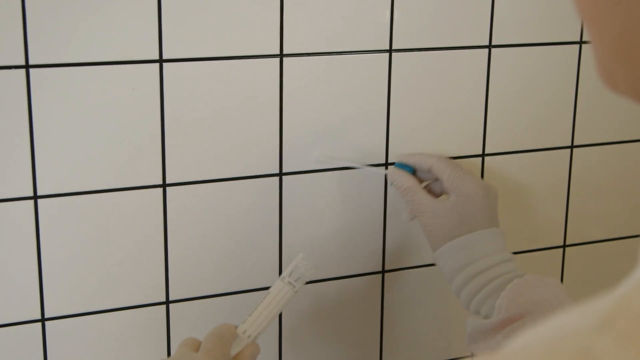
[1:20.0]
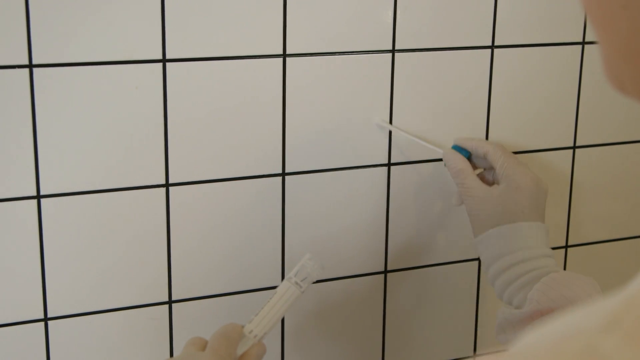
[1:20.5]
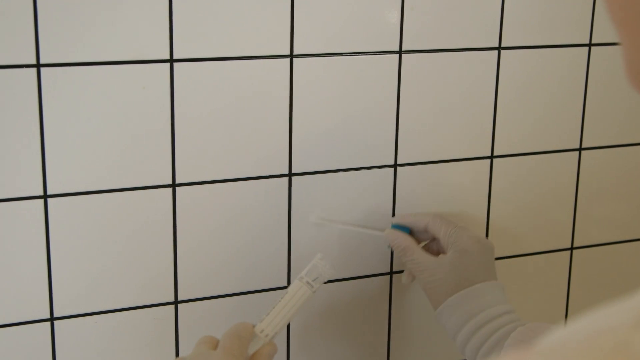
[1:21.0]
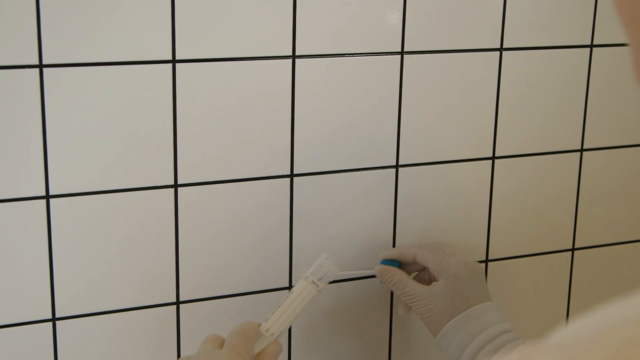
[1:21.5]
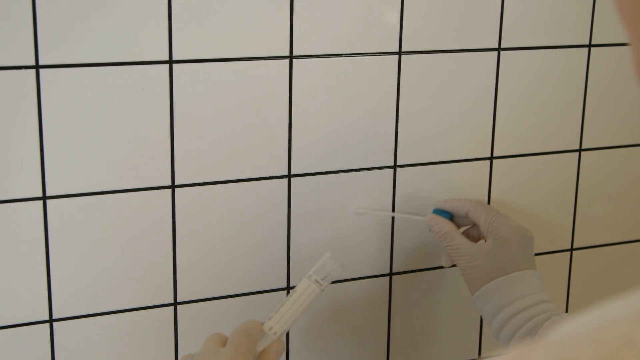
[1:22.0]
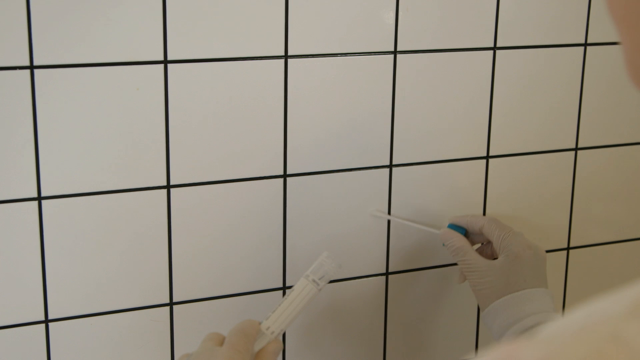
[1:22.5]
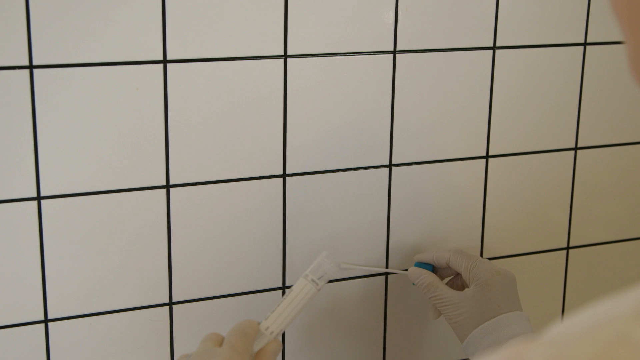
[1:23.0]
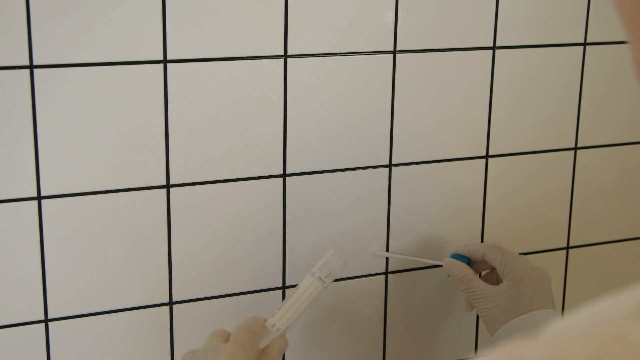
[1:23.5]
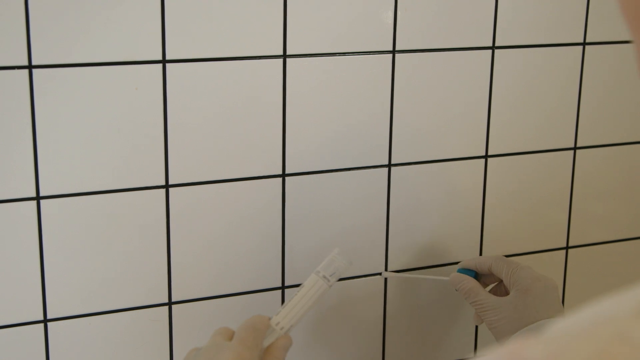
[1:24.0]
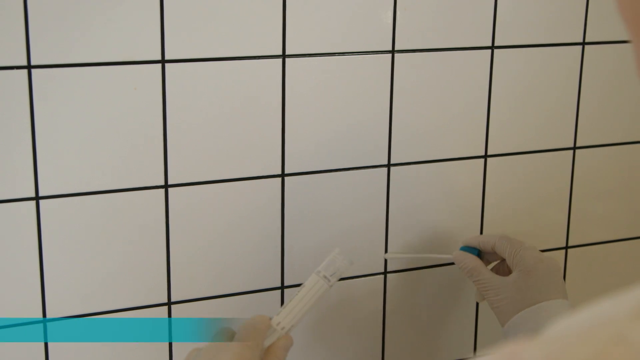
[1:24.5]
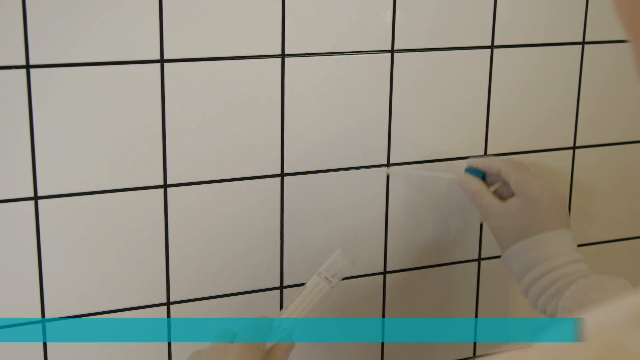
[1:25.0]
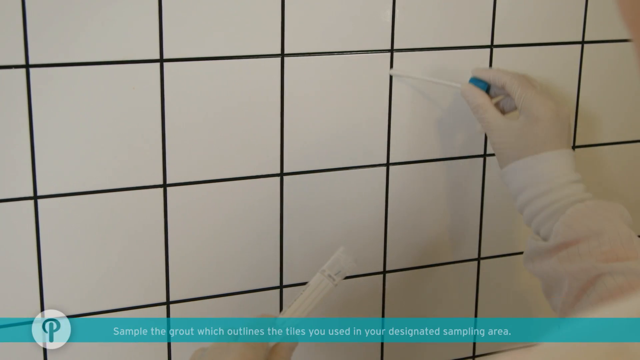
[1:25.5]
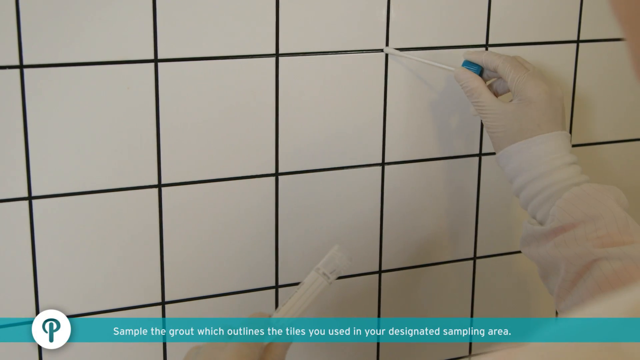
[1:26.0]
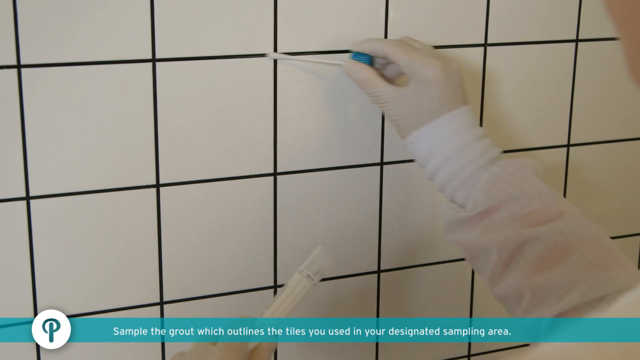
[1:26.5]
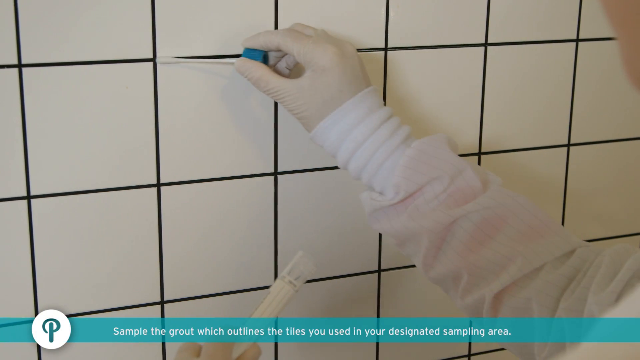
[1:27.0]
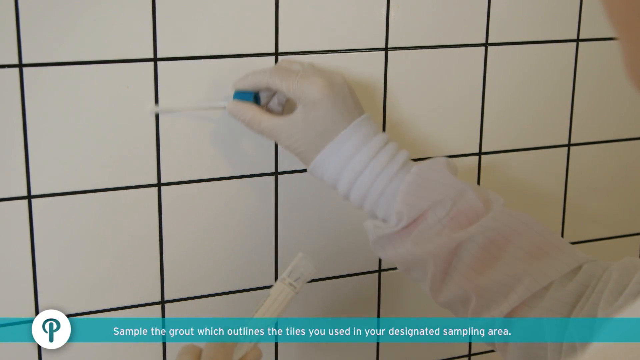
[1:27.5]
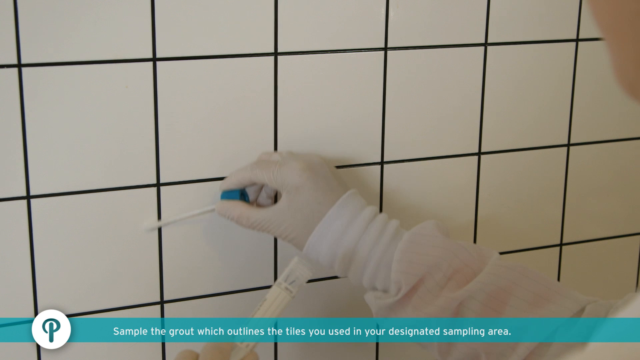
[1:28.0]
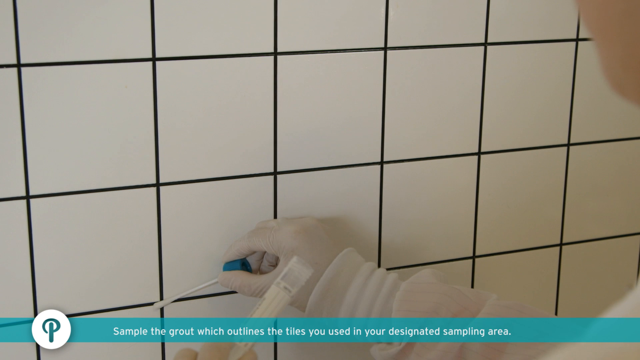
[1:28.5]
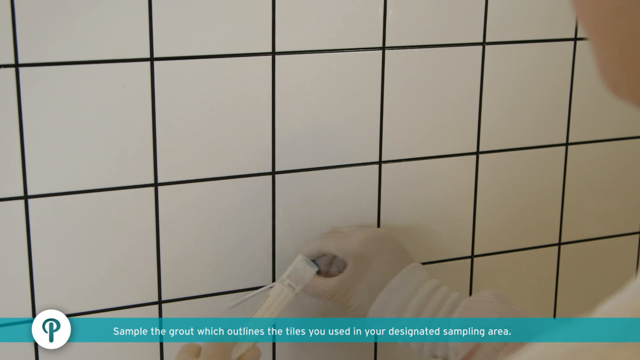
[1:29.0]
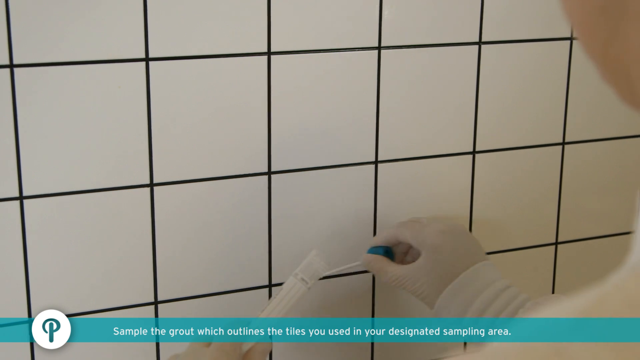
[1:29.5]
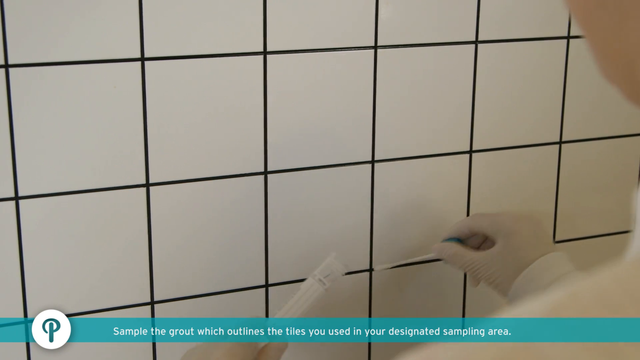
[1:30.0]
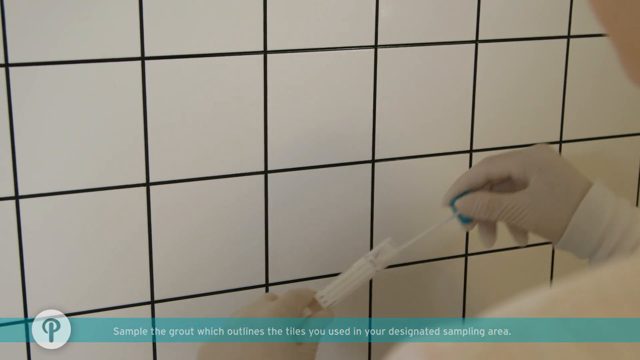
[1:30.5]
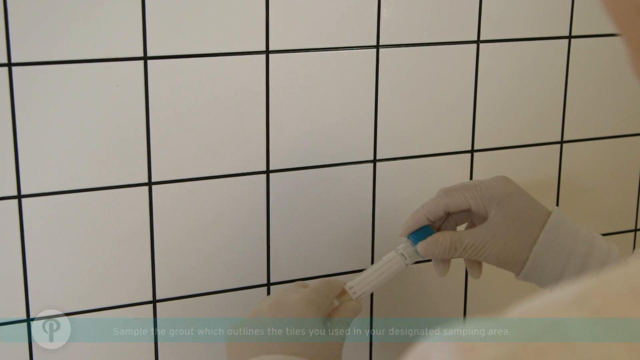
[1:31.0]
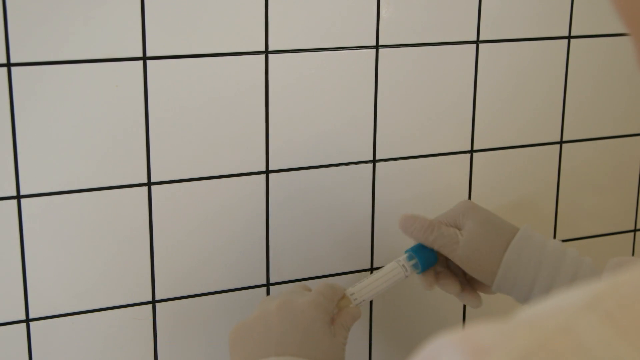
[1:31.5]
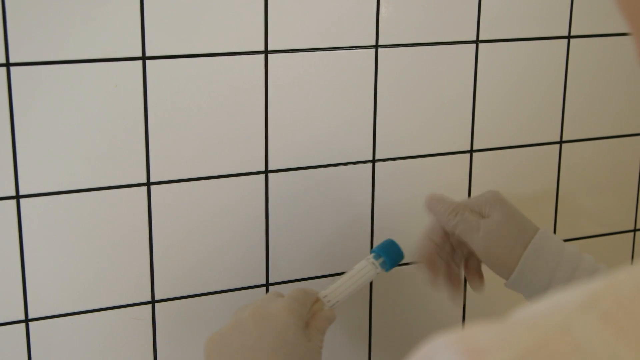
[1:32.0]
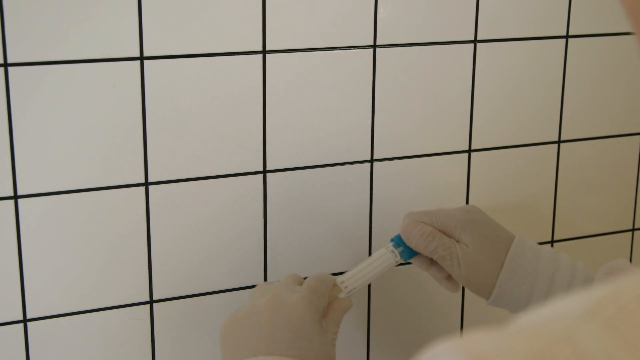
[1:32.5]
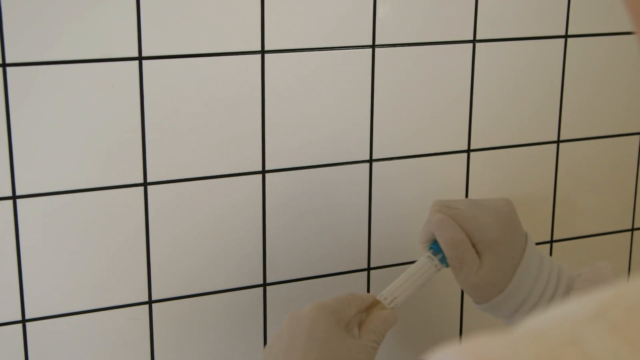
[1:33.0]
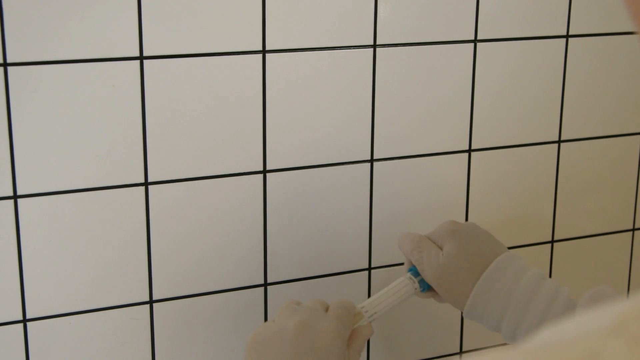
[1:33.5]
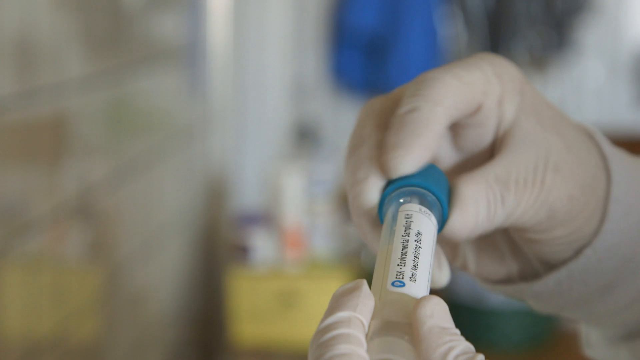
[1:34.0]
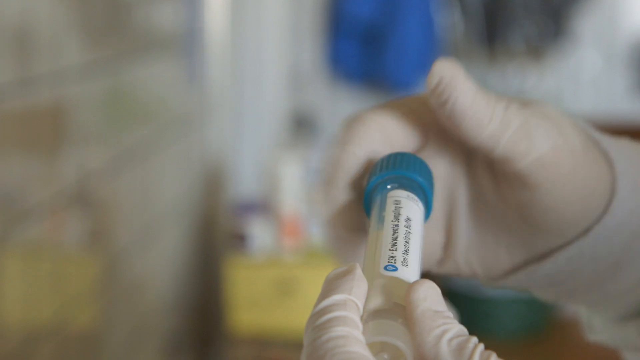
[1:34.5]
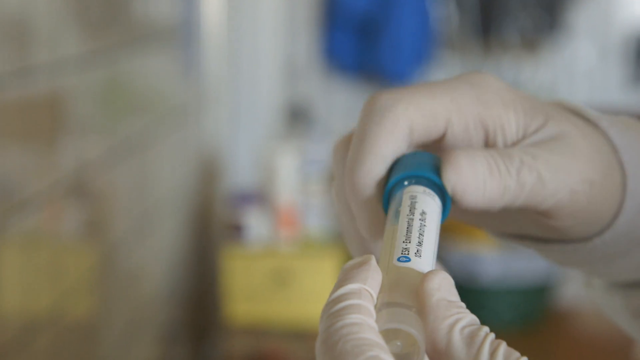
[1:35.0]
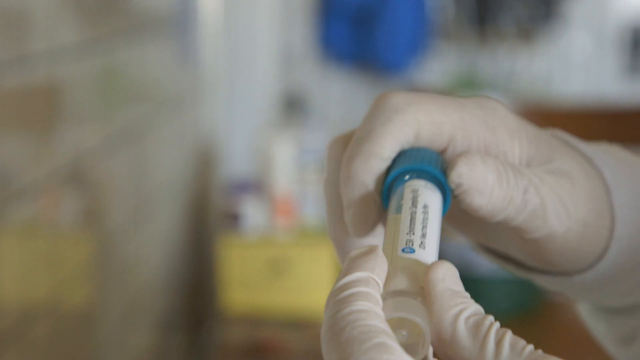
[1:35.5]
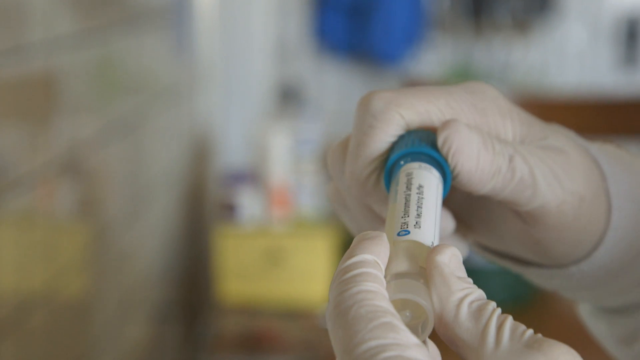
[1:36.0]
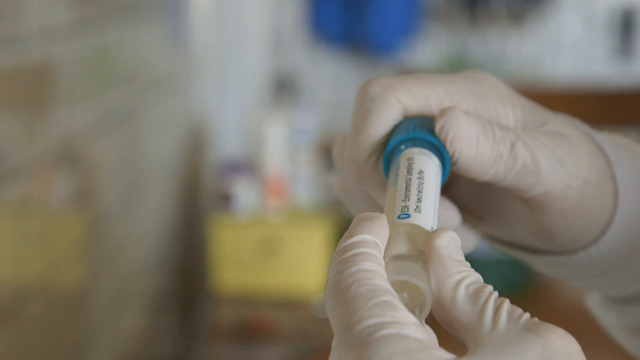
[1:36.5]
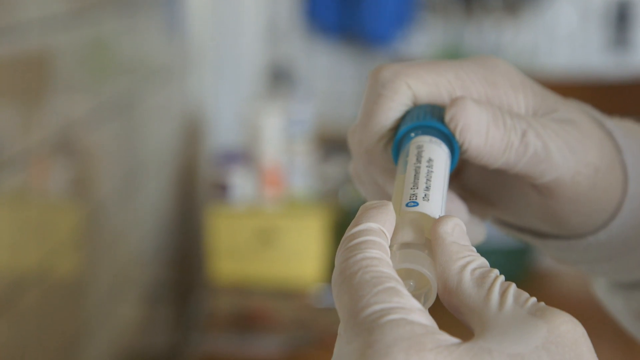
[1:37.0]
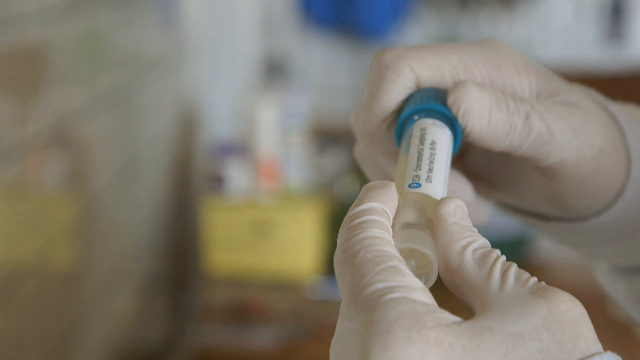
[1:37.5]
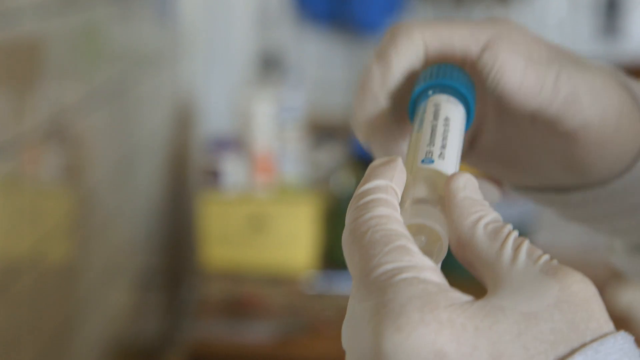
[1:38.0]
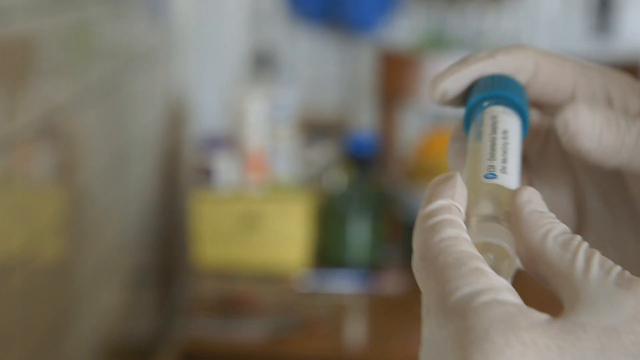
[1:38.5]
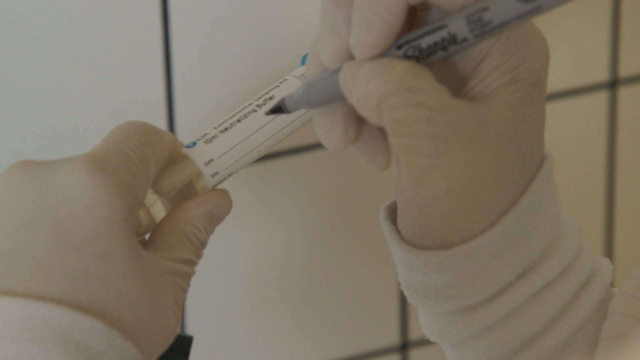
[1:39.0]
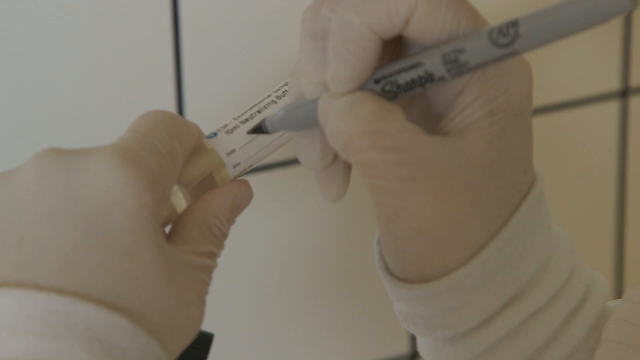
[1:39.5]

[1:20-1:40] She continues swabbing diagonally, then traces around the outer perimeter of four tile squares along the grout. She quickly puts the swab back in the test tube and tightens the lid very firmly. She then takes a Sharpie pen and starts writing on the side of the test tube. The sampled area is a big section of the tile wall rather than a small spot.